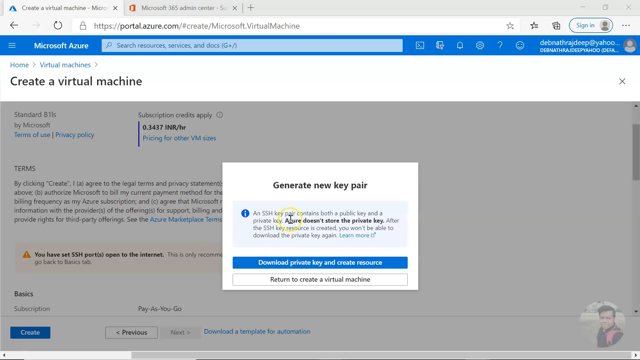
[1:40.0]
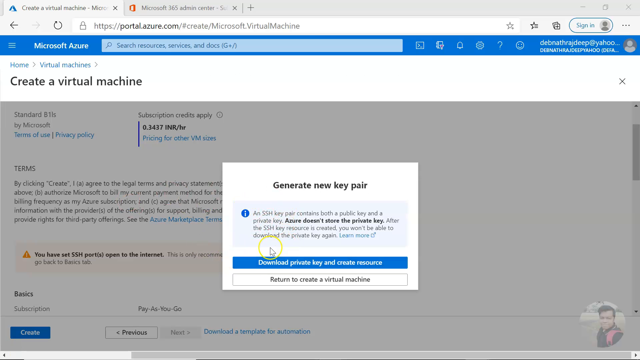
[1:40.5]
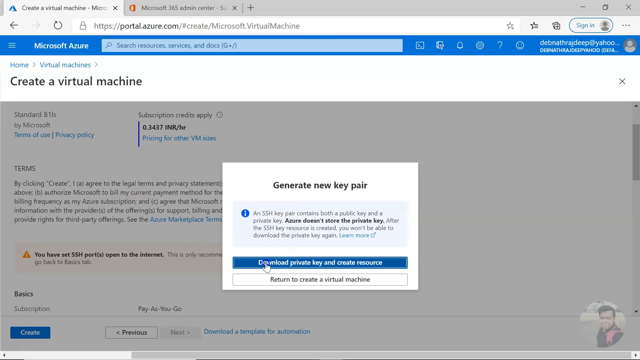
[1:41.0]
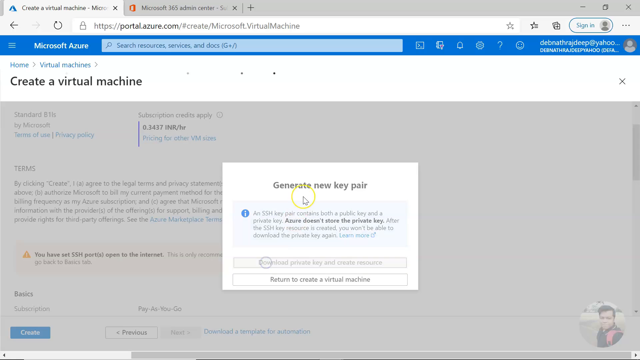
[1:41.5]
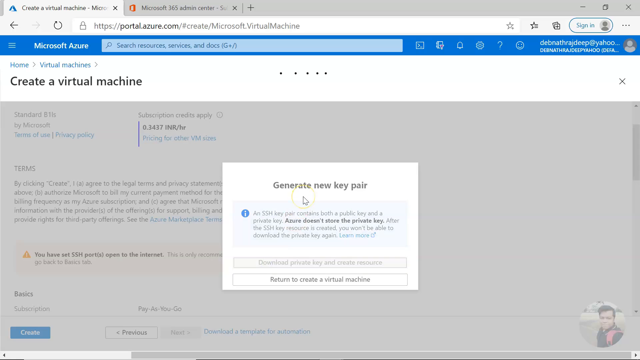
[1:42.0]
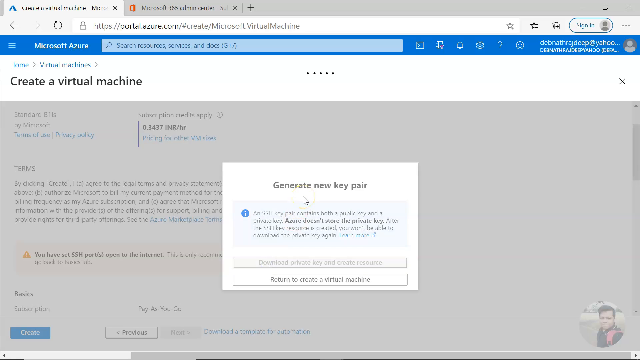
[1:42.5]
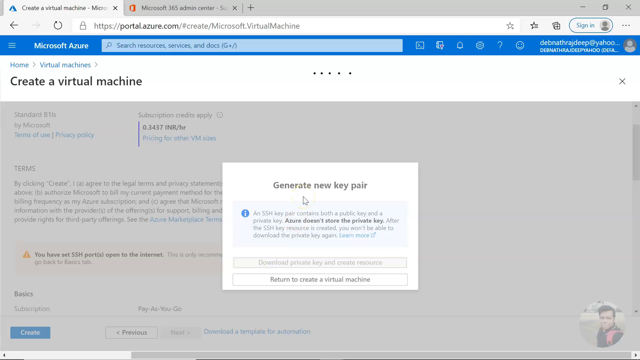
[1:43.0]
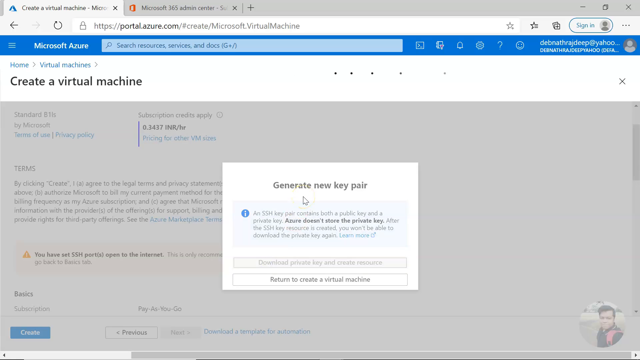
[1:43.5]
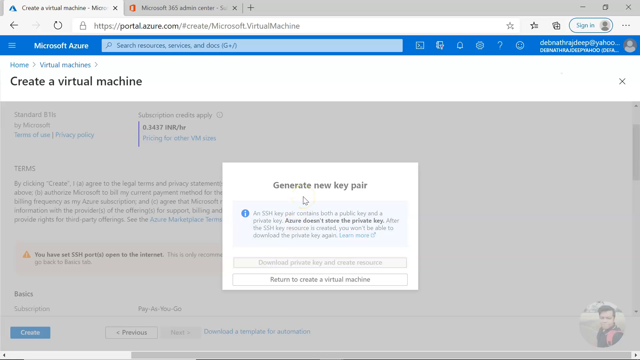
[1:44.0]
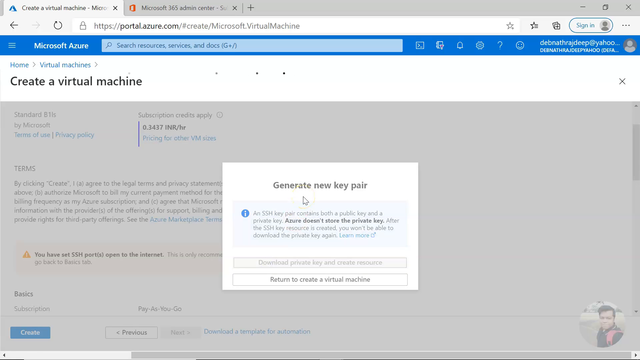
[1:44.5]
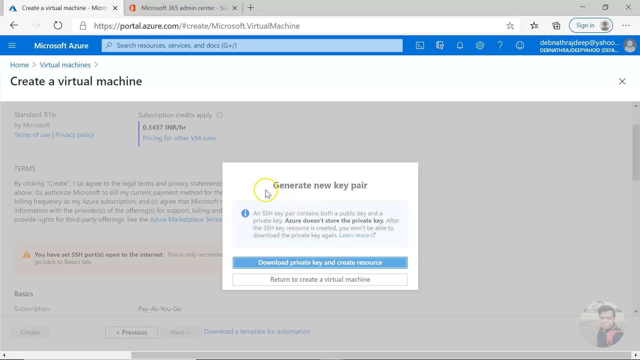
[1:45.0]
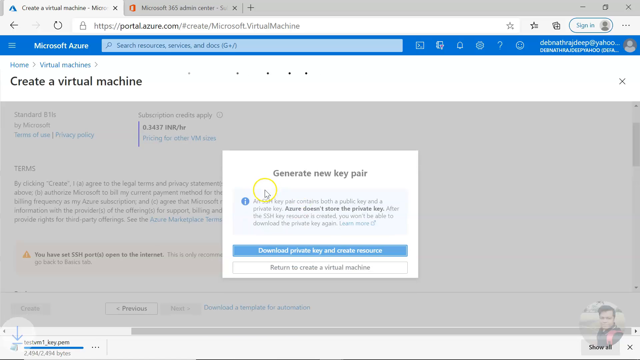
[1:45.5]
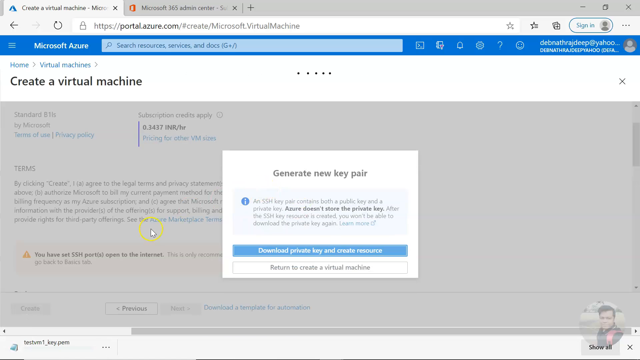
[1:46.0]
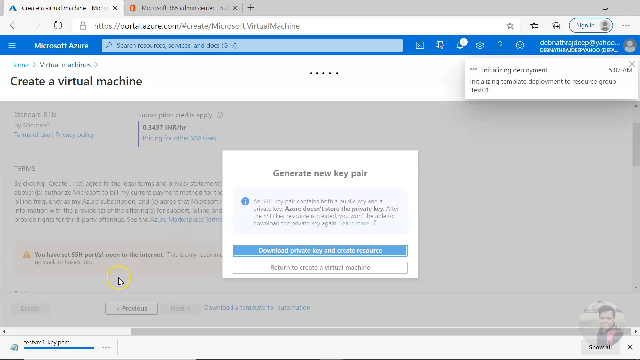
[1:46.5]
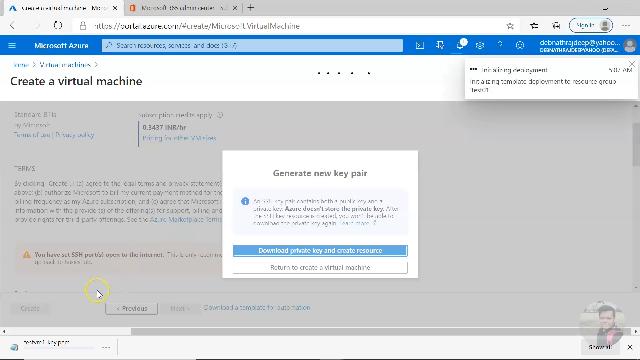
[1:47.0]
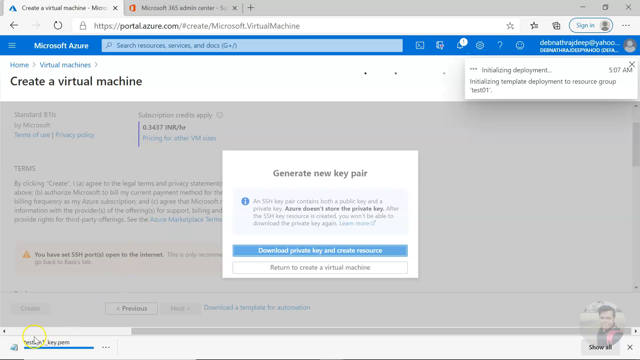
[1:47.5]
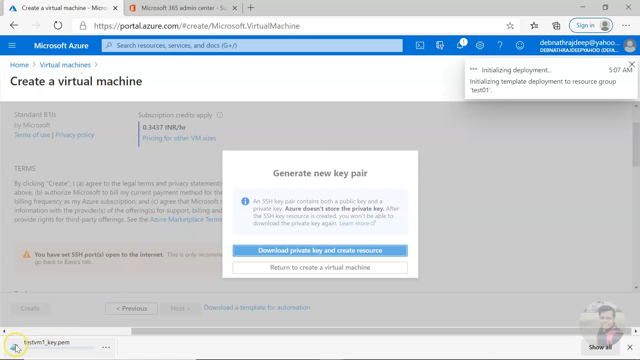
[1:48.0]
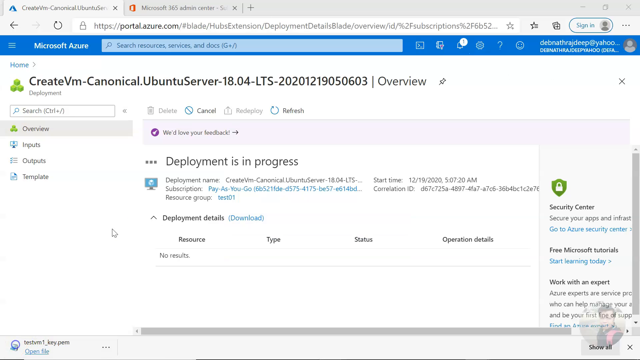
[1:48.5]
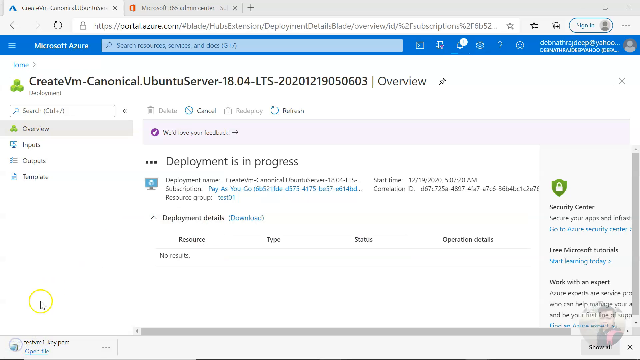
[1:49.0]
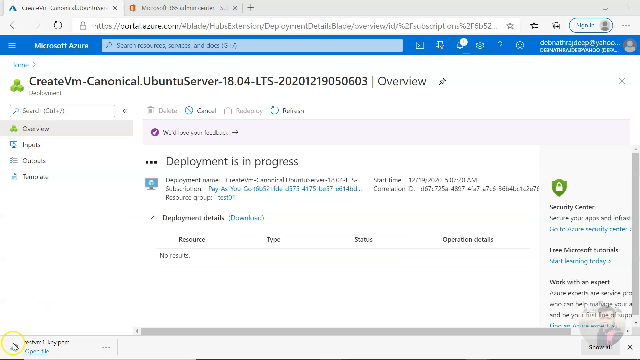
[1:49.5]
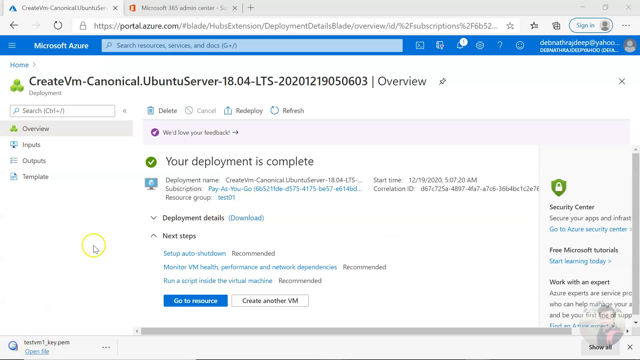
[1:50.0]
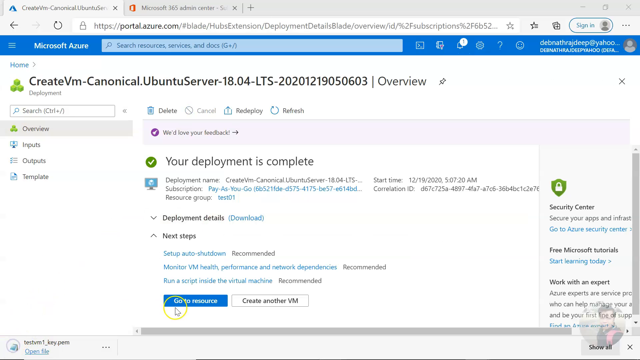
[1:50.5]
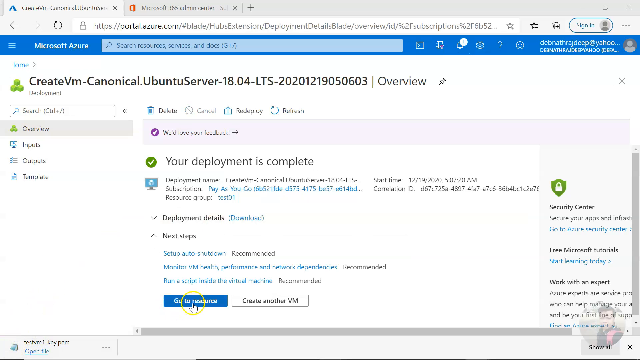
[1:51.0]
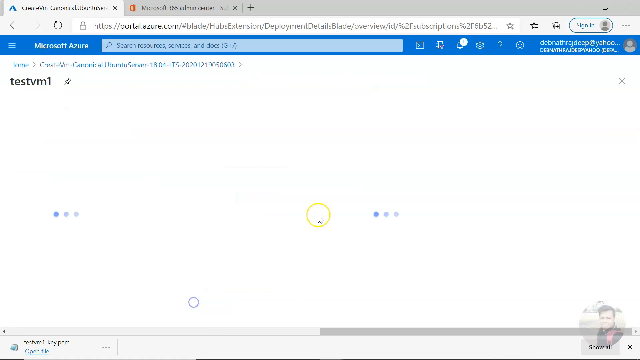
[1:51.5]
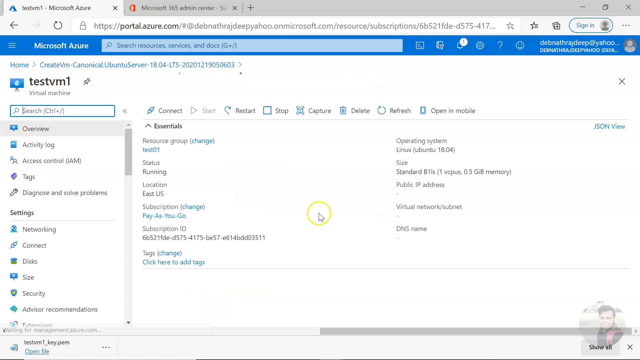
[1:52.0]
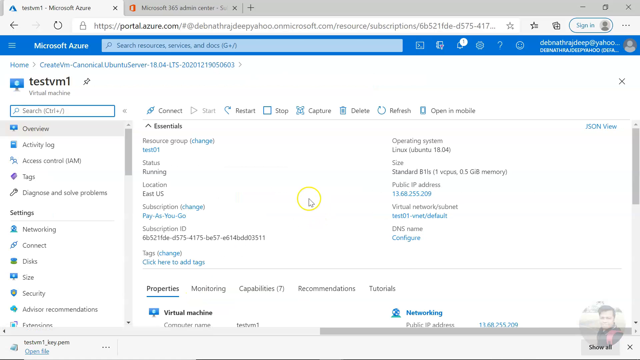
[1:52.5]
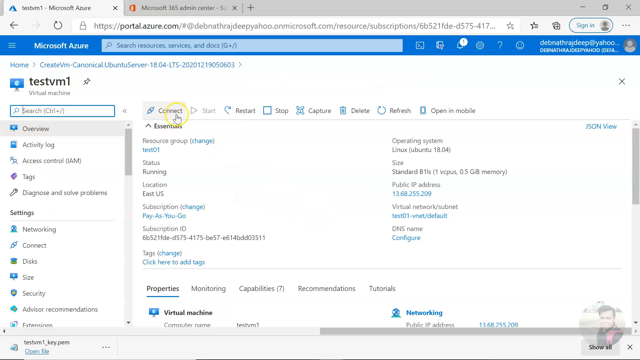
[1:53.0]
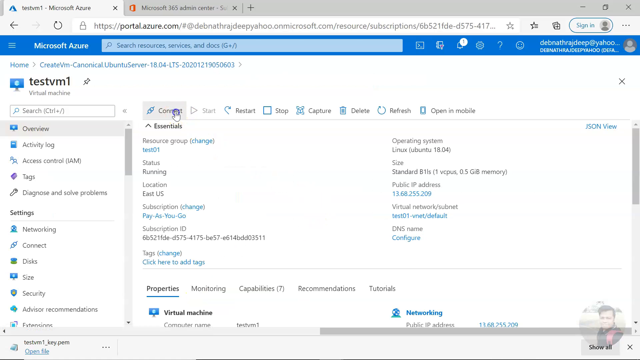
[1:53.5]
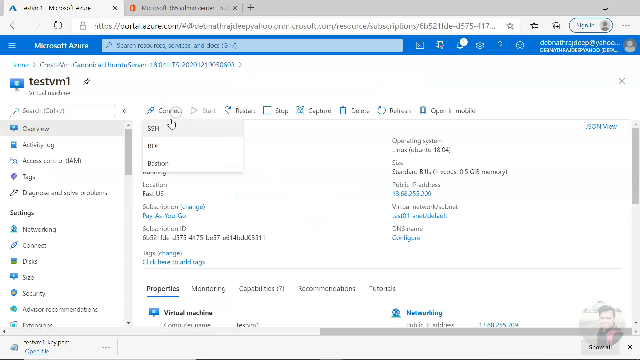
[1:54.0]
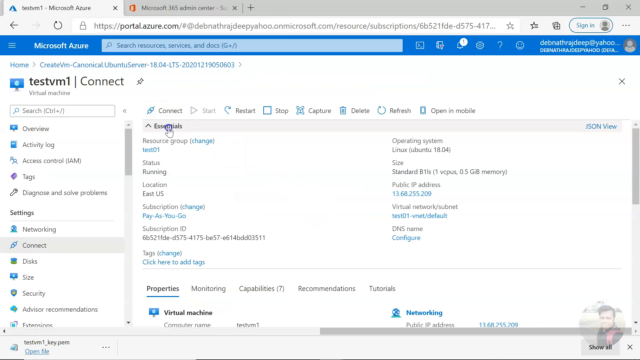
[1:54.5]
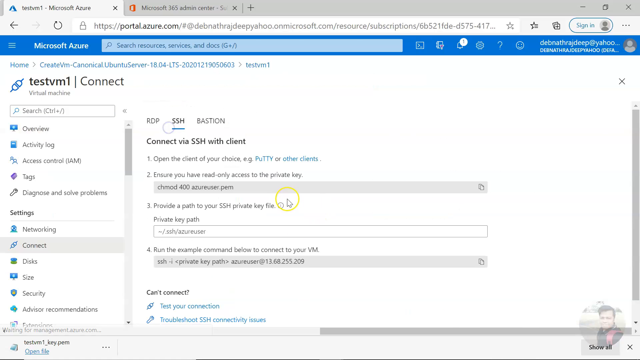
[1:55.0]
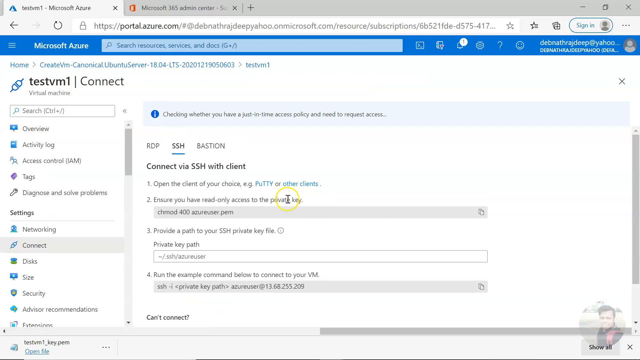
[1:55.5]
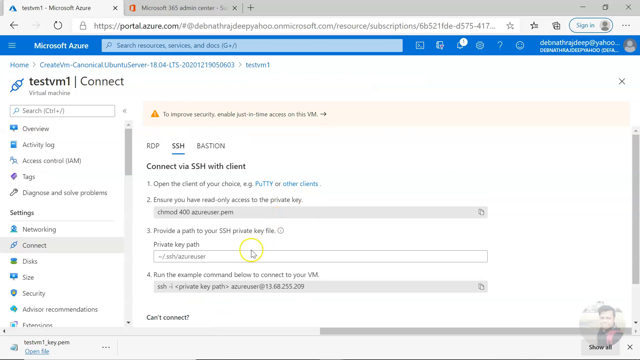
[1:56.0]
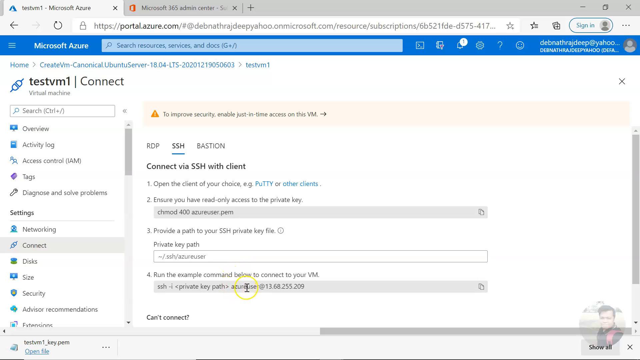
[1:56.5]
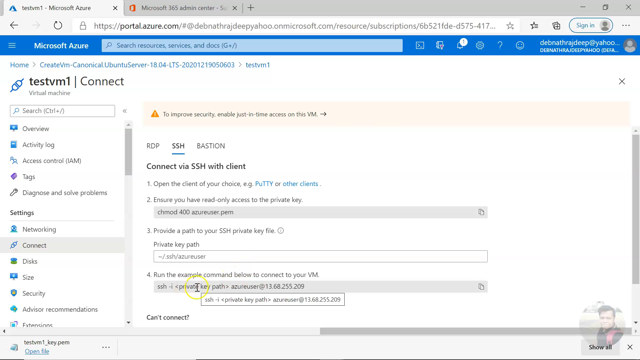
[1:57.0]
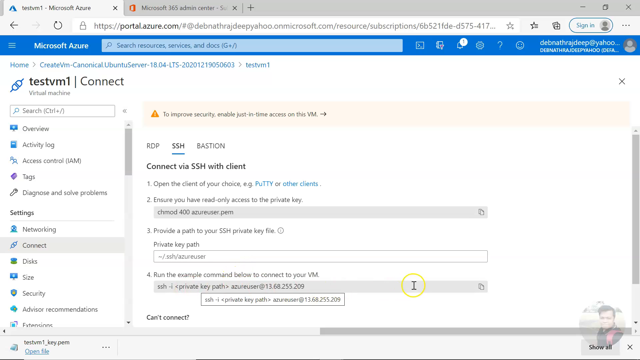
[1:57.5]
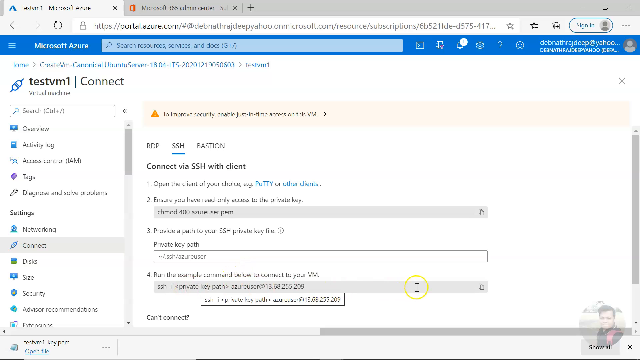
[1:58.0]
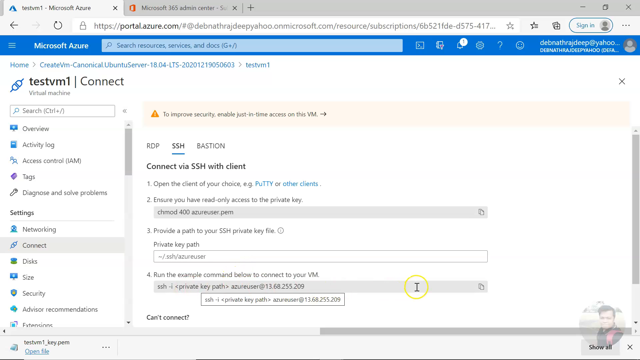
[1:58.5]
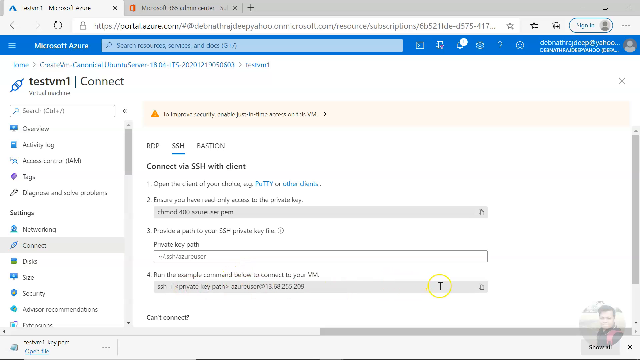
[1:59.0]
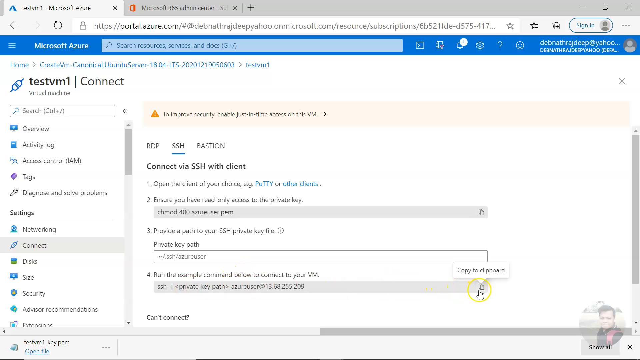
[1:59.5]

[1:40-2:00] In the "Generate new key pair" pop-up, the cursor clicks the first button, "Download private key and create resource". A small loading graphic of small black squares appears at the top of the screen, and the page is grayed out while it loads. A download pop-up appears at the bottom of the browser, indicating the download is finished, and a white rectangular box pops up in the top right corner reading "Initializing deployment". When the page finishes loading, a deployment page appears with the title "Create VM Canonical Ubuntu Server 18.04-LTS-2020-1219050603 Overview" and a message reading "Deployment is in progress", along with the deployment name, subscription, resource group, start time and correlation ID. The cursor seems to go to the bottom left of the browser, where the completed download file is clicked. The status on the page then changes to "Your deployment is complete" with a green circle and a white checkmark. The user clicks the "Go to resource" button at the bottom of the page, opening the test vm1 virtual machine page with all of its essential information. The user clicks the connect tab at the top of the page, which drops down a menu reading "SSH", "RDP" and "Bastion". The user clicks SSH, and a page opens under the SSH tab giving steps on how to connect via SSH with a client. The user goes to the fourth step, which contains a text box with a command and a paper icon on its right side. Hovering over the icon brings up a white rectangular box reading "Copy to clipboard", which the user clicks.